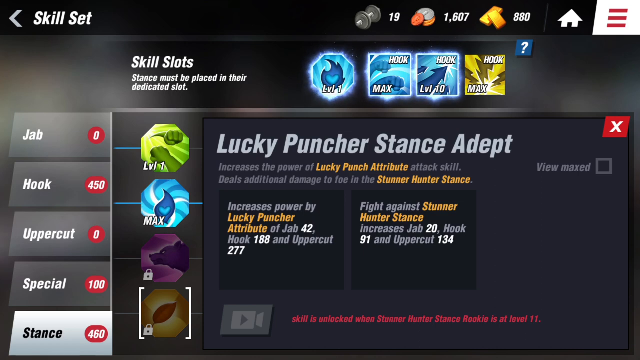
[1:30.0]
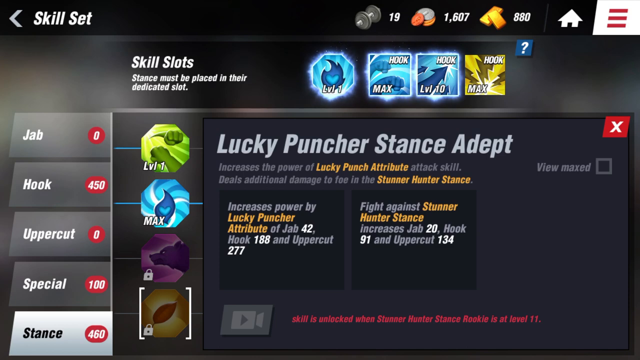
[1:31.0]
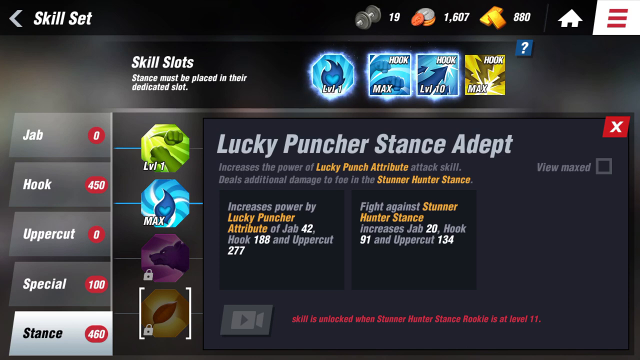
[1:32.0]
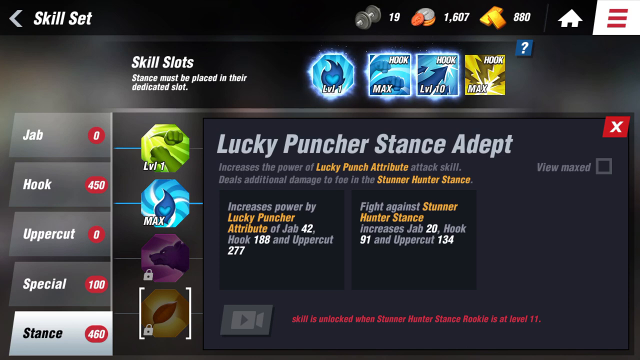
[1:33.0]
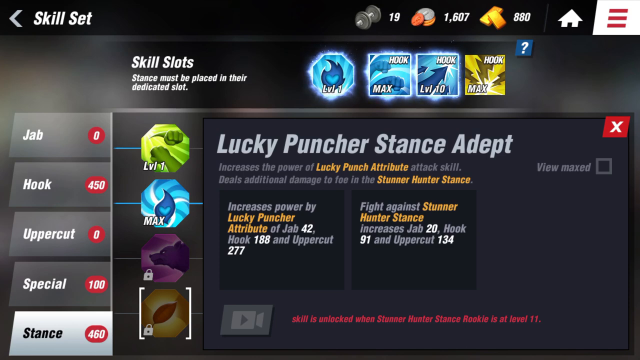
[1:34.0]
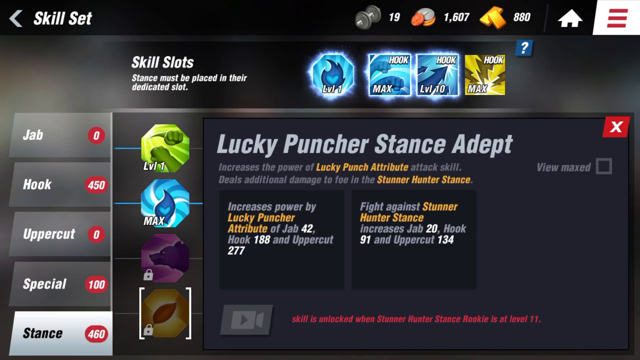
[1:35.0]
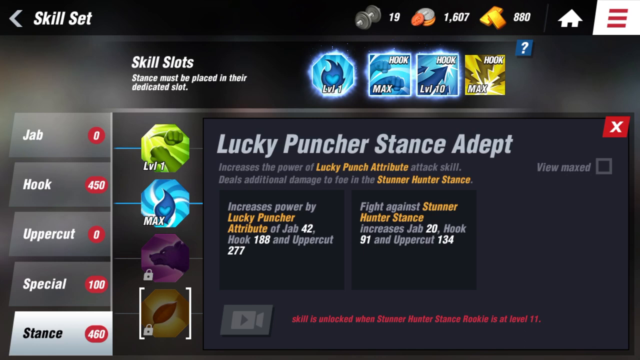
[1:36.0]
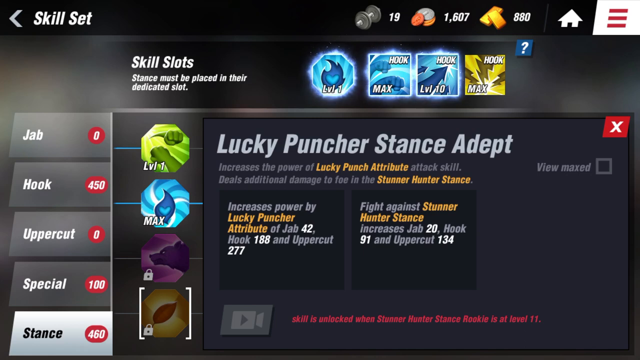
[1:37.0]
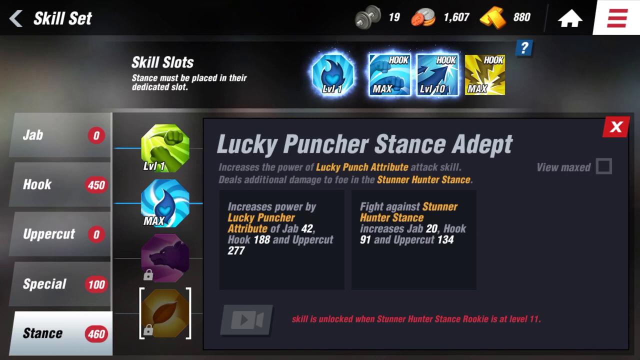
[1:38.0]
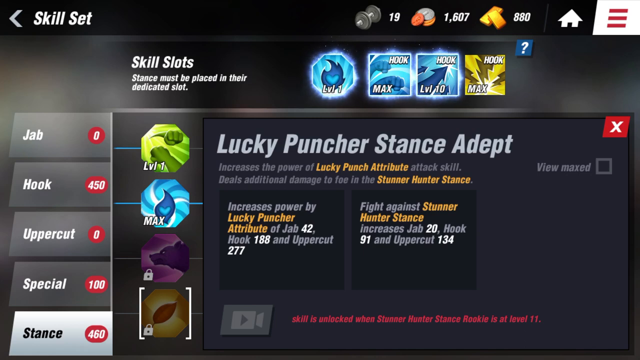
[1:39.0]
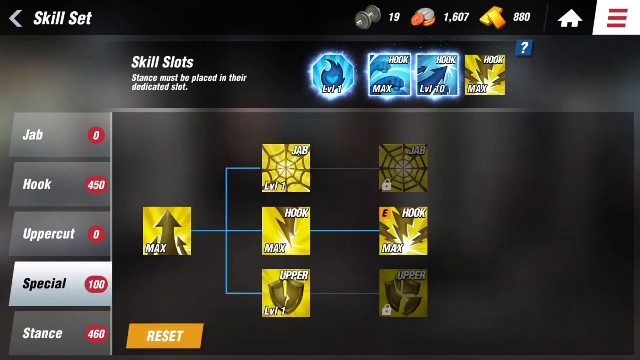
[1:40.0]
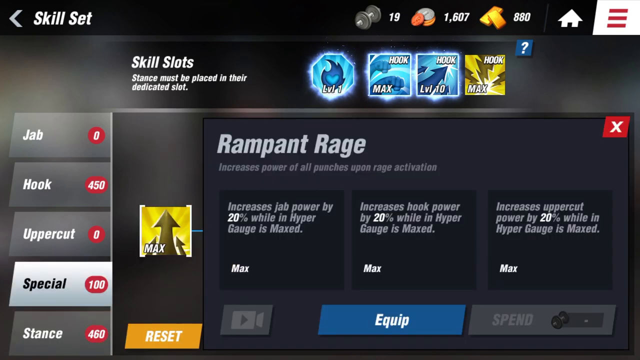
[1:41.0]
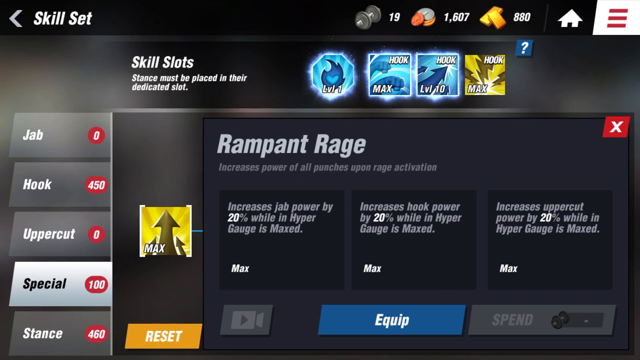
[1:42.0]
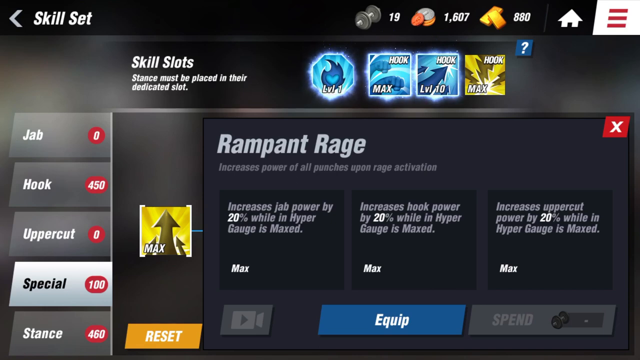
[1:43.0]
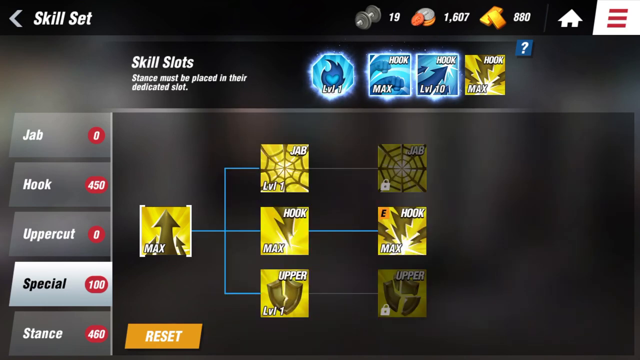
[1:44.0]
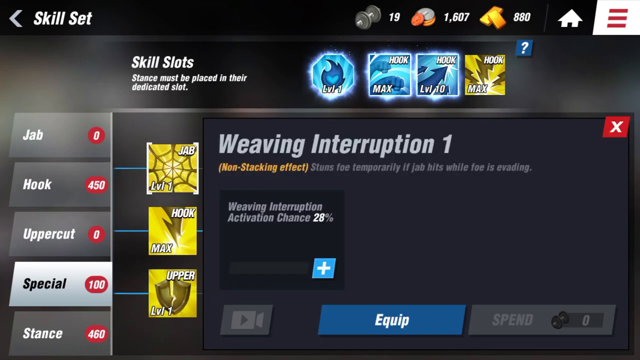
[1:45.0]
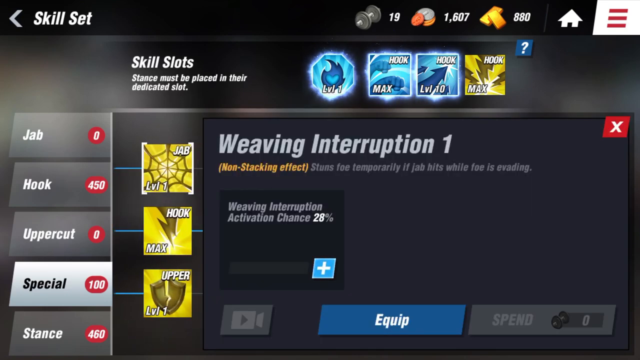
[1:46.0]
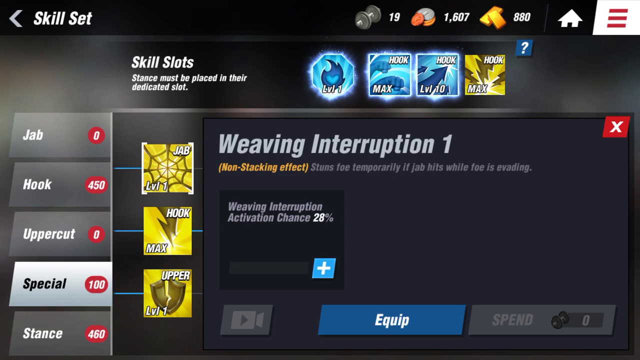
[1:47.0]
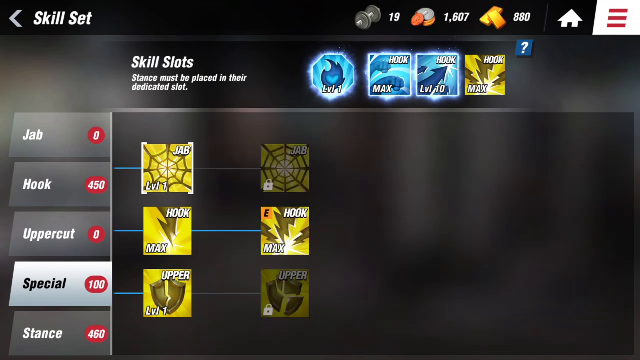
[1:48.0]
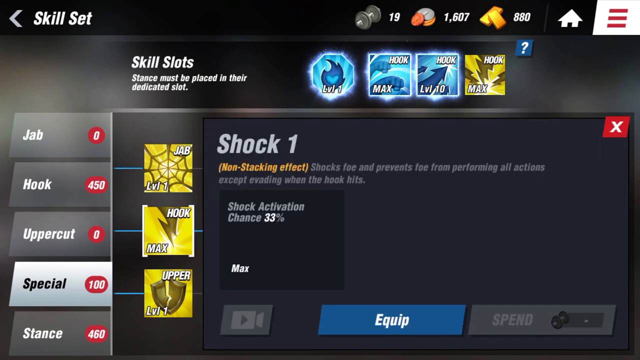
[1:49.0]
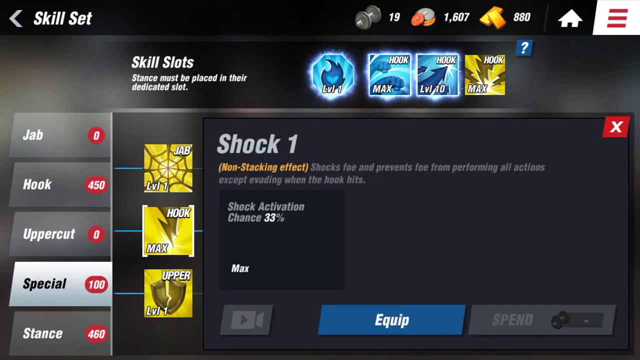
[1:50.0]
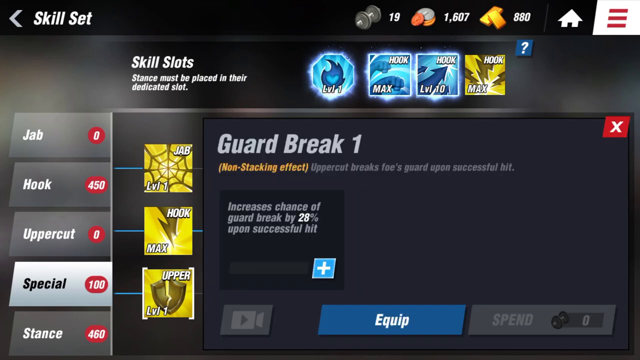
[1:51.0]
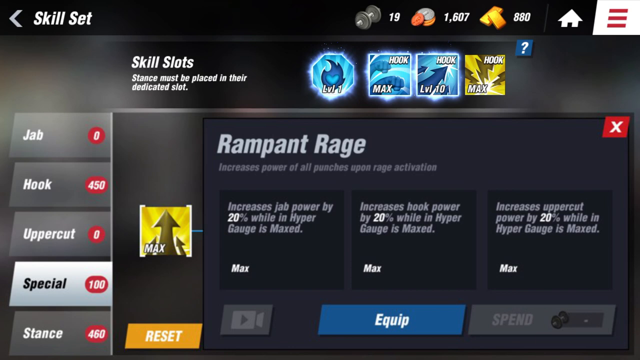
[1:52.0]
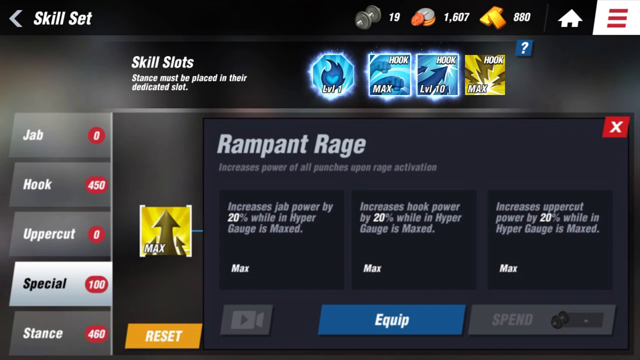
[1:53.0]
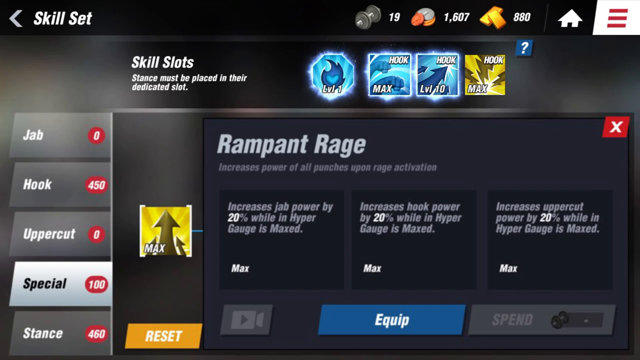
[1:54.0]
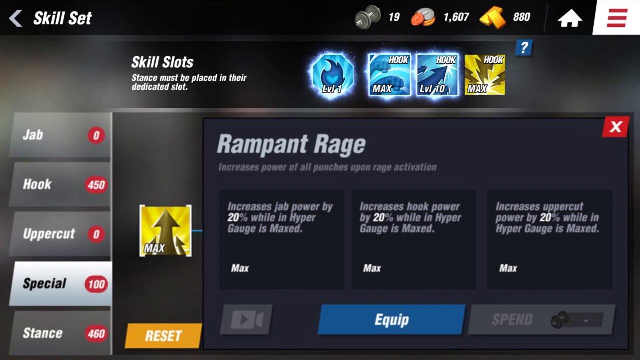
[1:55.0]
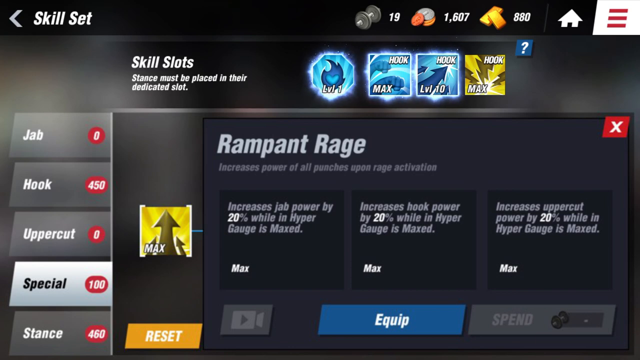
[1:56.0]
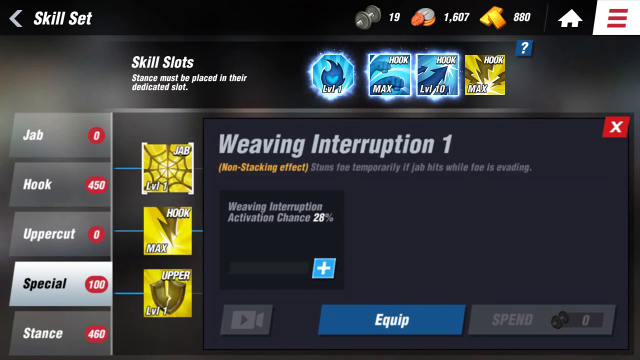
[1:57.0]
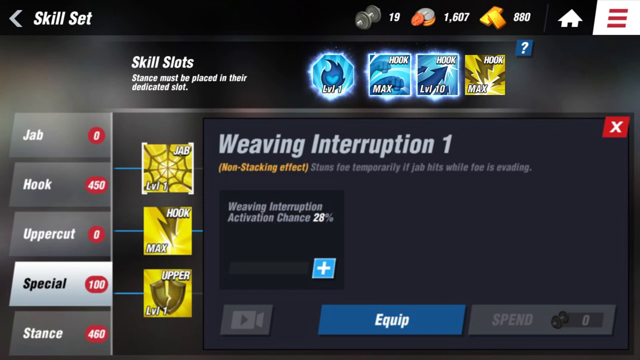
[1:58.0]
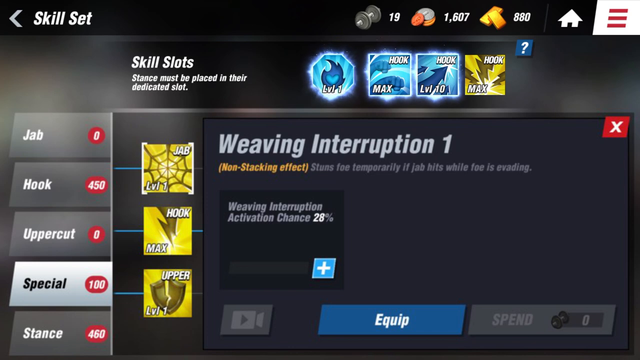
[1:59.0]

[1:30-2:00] On the skills page at "lucky puncher stance adept", the selection moves from the stance button on the left up to the special button. Special shows "100" in a red oblong, and it brings up "Rampant Rage", with "increases power of all punches upon rage activation" beneath. Three max boxes read "increase jab power by 20% whilst in hyper gauge", "increases hook power by 20% while in the hyper gauge" and "increases uppercut power by 20% whilst hyper gauge". The selection then moves to jab, hook and uppercut. On the left are yellow squares showing level one for jab, max for hook and level one for upper. The screen reads "weaving interruption one", "non-stacking effect, stuns foe temporarily if the jab hits whilst foe is evading", with a box beneath reading "weaving interruption activation chance 28%". There is a blue square with a white cross and what looks like a slider. Next is "shock one": "non-stacking effect shocks your foe and prevents foe from performing all activities except evading when the hook hits", with "shock activation chance 33%". Then "guard break" and "guard break one" come onto the screen.